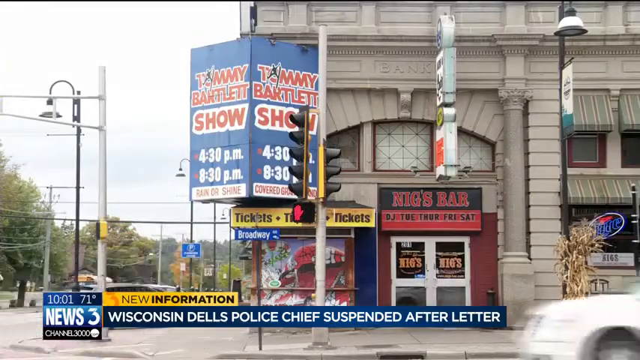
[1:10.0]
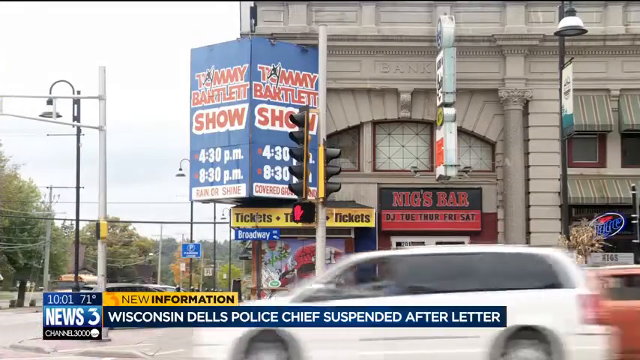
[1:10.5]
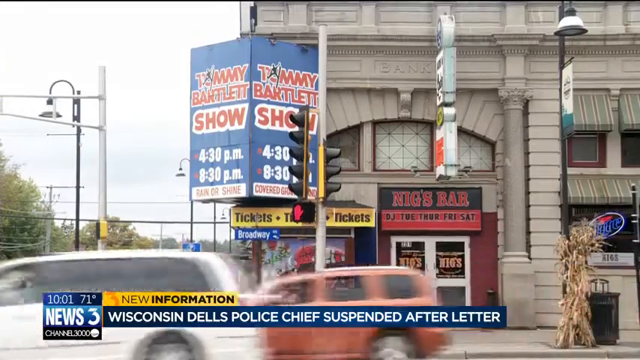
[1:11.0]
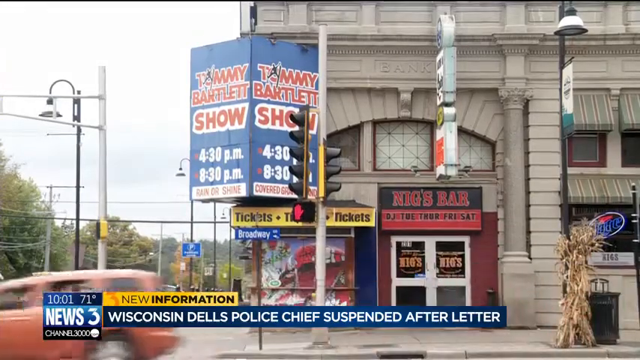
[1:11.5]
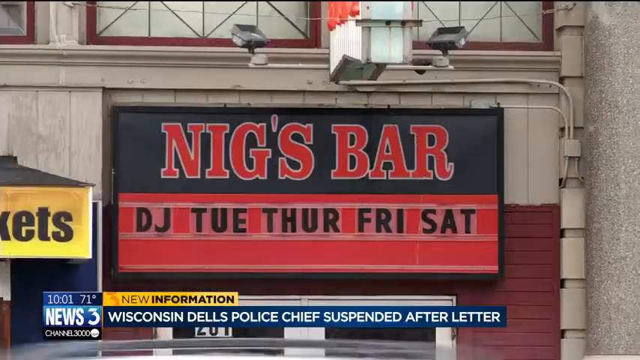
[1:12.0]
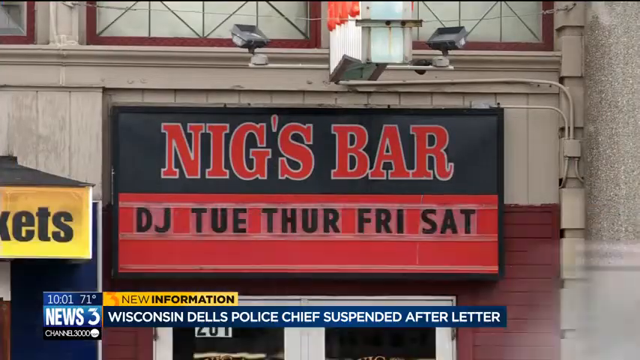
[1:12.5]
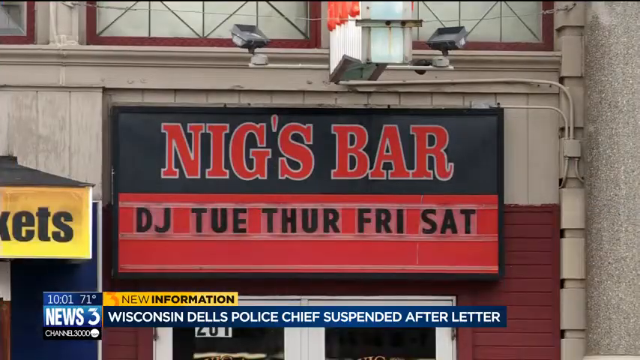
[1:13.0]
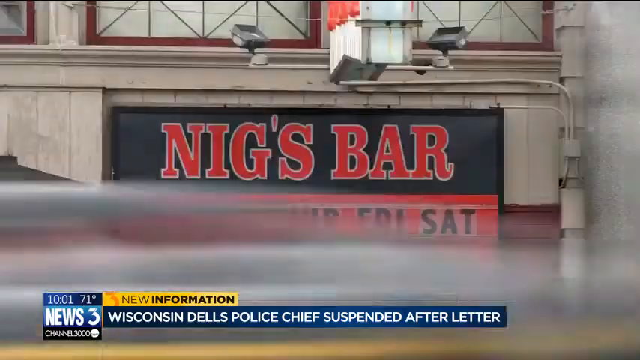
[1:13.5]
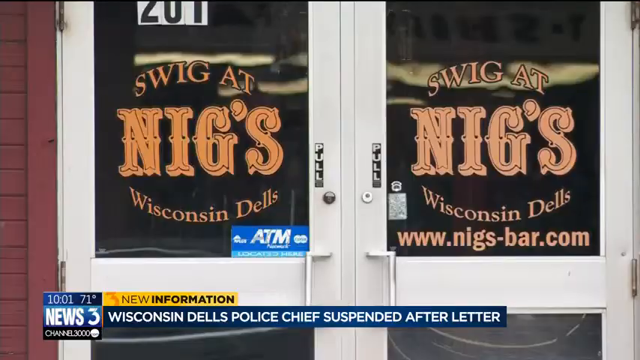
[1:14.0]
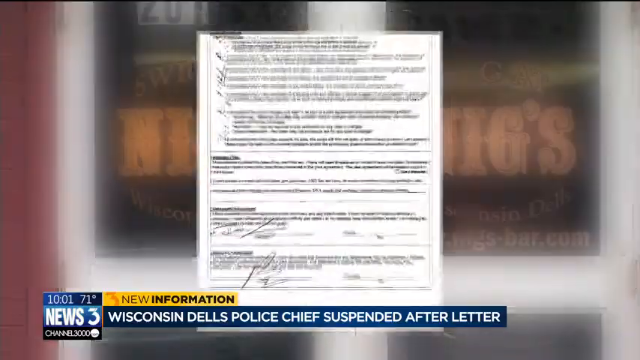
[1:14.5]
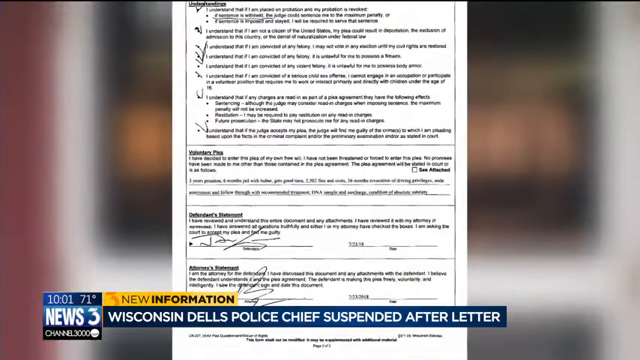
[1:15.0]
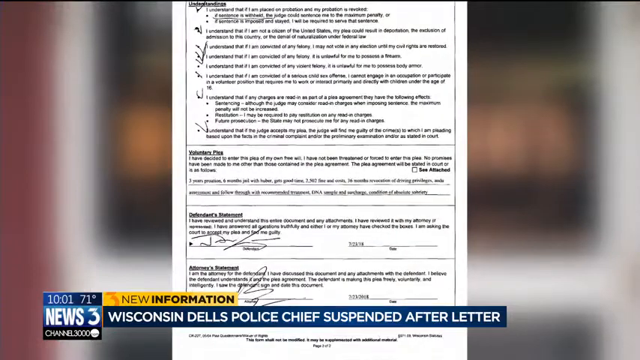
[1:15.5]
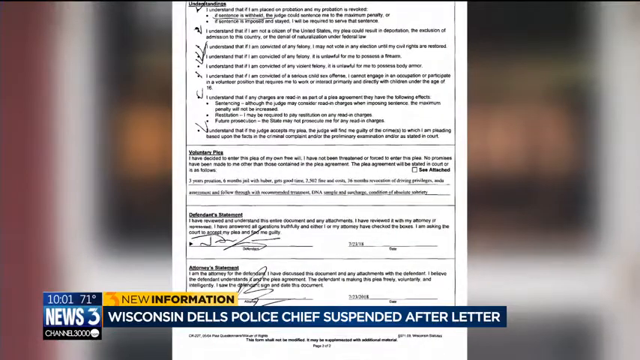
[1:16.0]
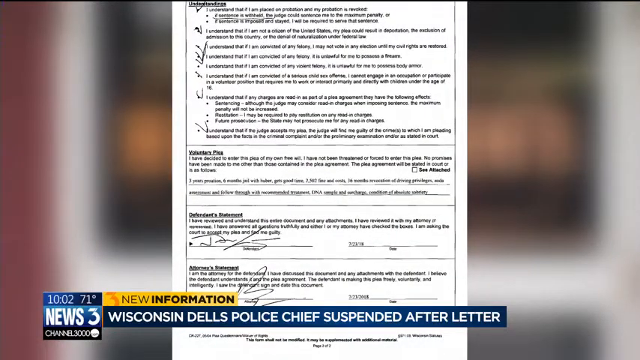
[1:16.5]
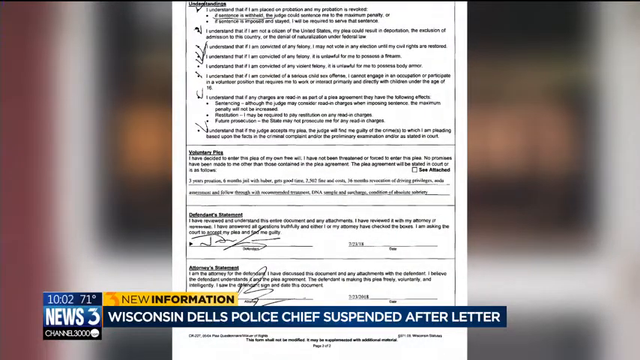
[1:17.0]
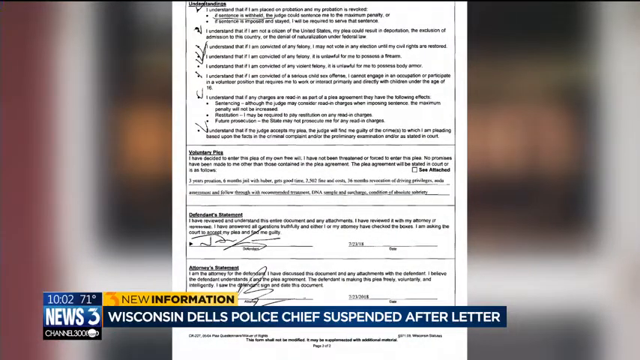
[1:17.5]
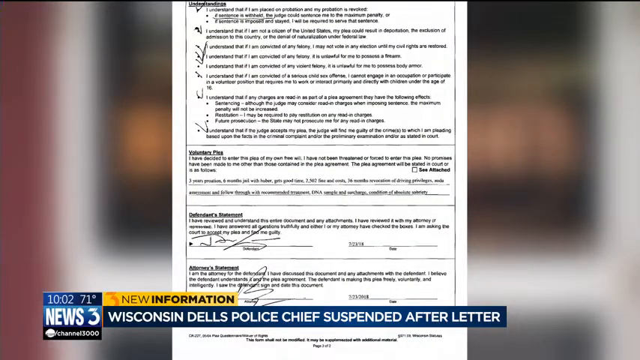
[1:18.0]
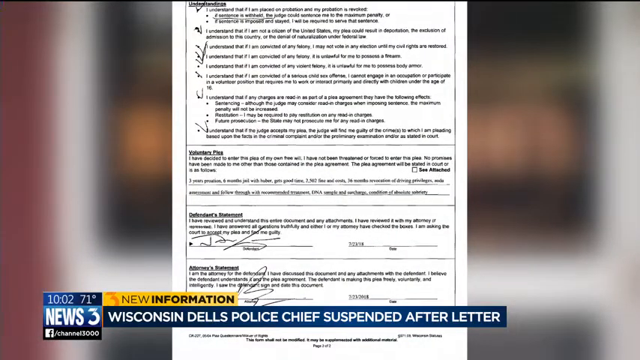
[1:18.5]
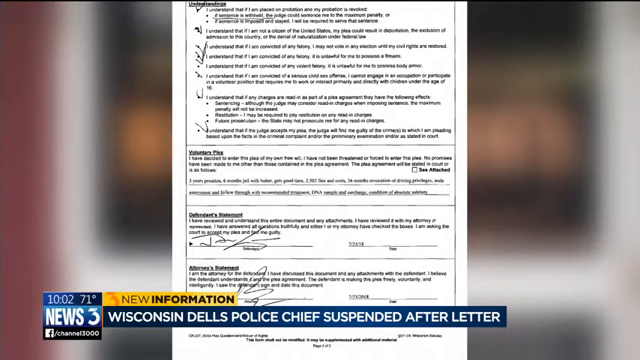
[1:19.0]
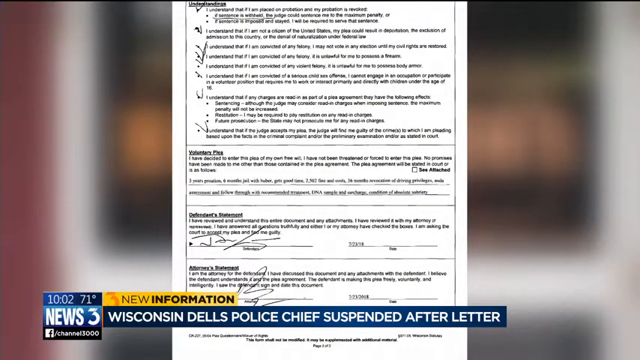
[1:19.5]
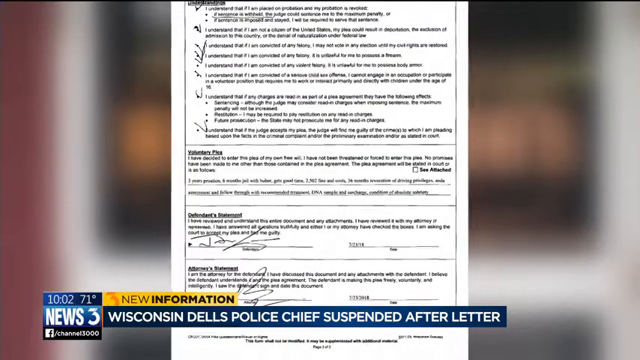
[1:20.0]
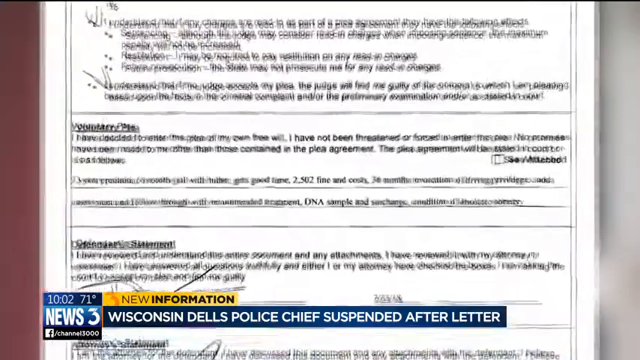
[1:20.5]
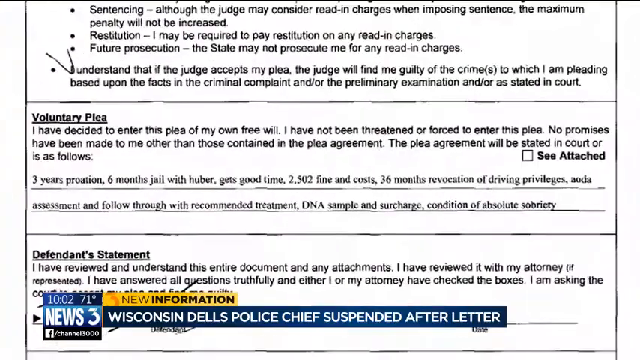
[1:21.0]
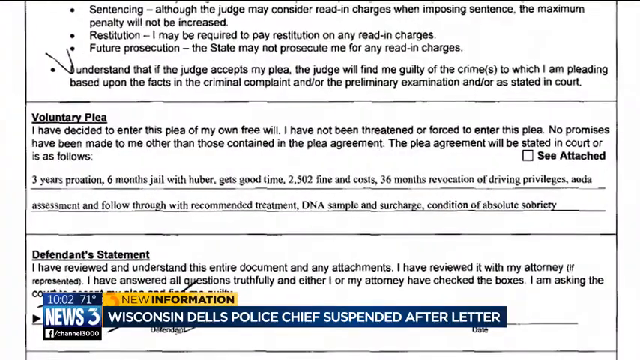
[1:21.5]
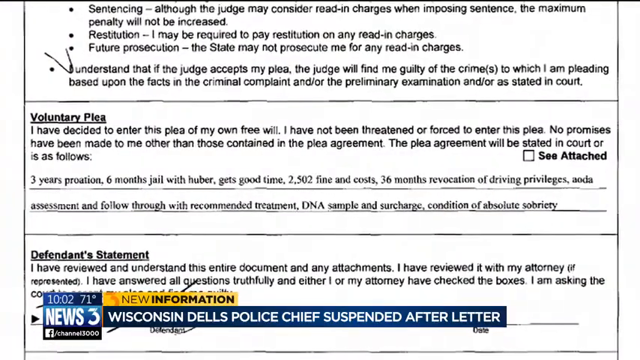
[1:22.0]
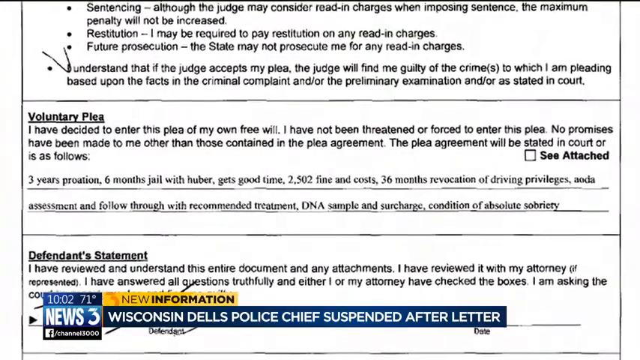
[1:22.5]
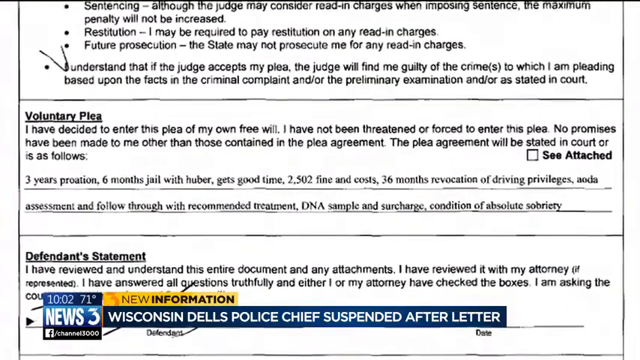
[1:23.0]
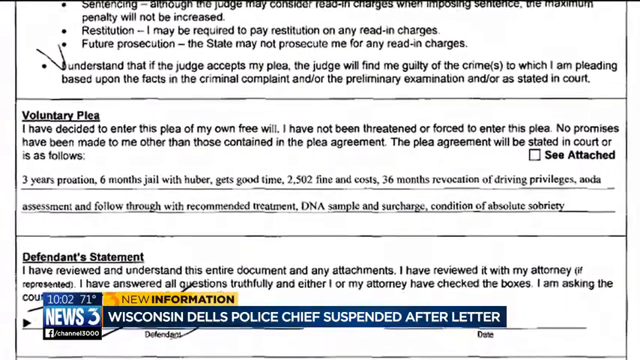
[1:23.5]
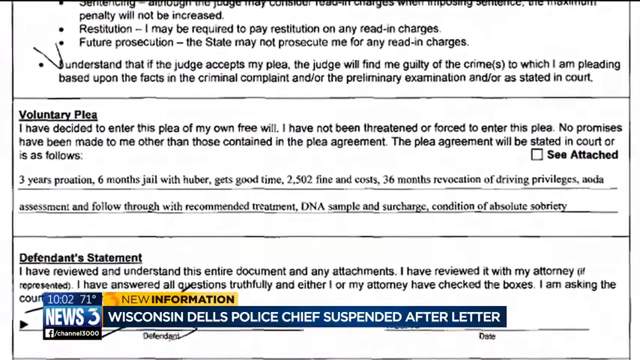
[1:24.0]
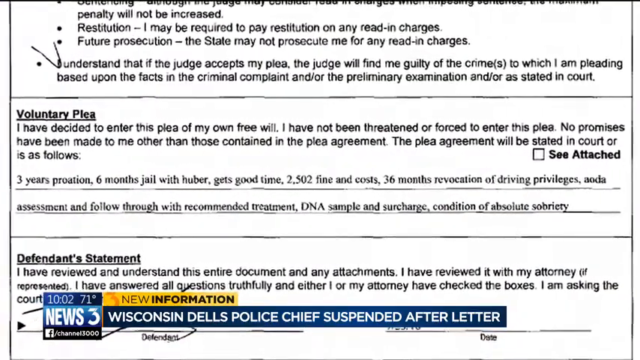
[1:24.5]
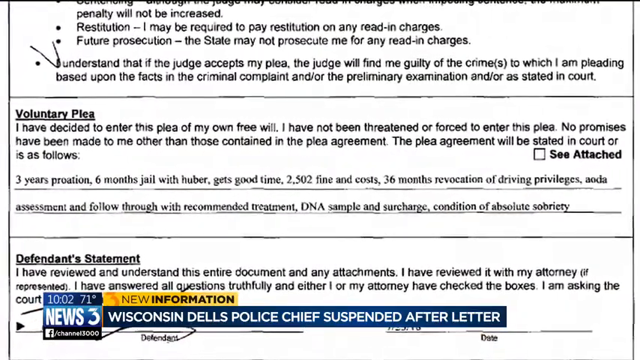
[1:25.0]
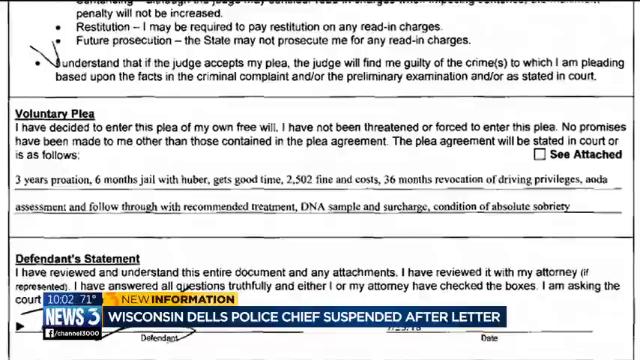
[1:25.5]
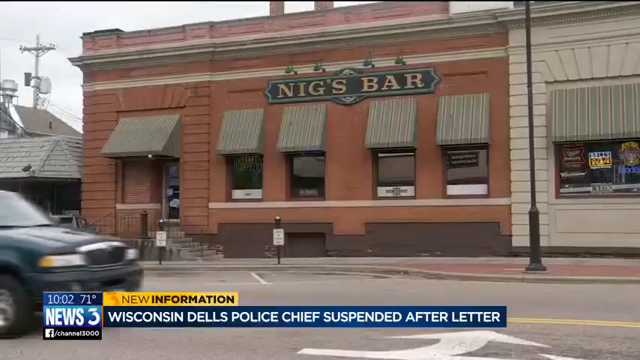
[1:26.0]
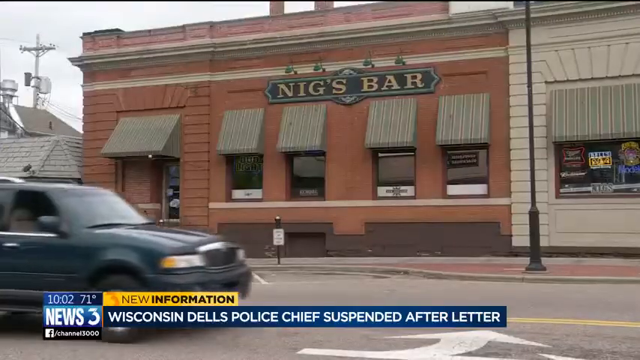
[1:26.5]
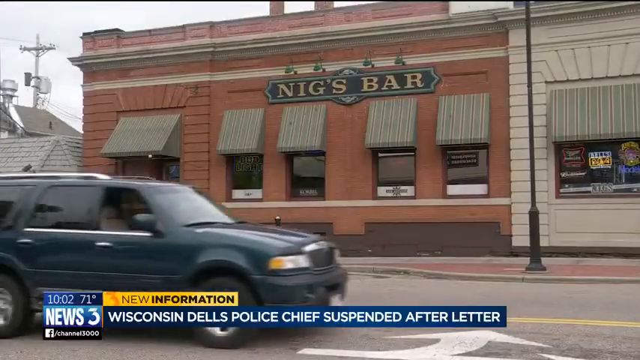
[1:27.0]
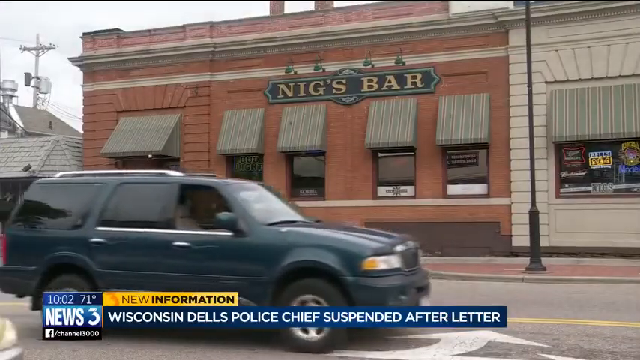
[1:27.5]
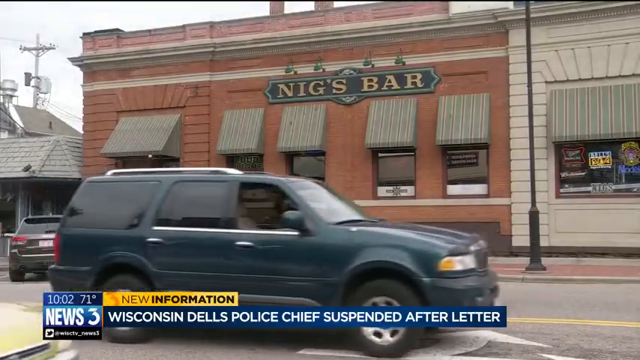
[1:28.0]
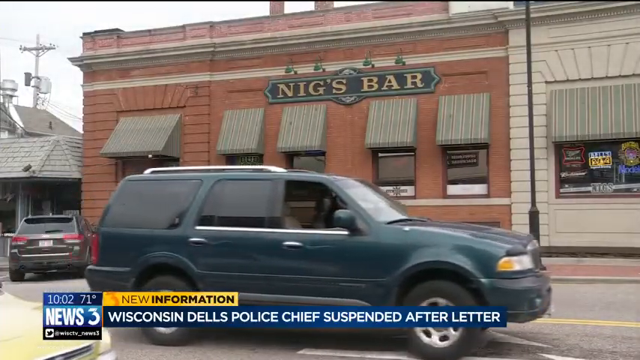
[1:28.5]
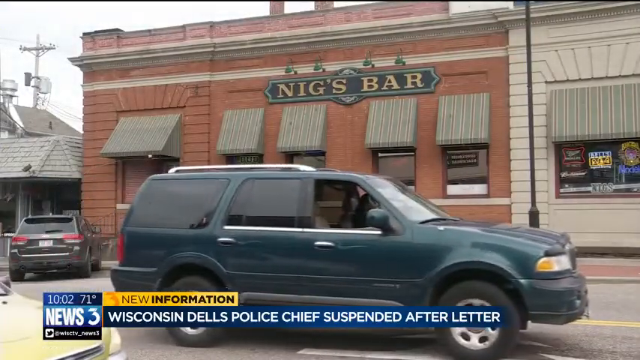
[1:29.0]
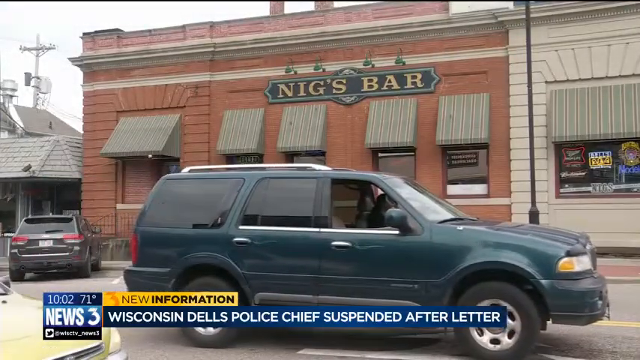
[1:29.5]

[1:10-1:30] The Channel 3 News report shows the headline "Wisconsin Dales police chief suspended after letter." Traffic is visible, and Nigs bar appears with a sign reading "DJ Tuesday, Thursday, Friday, Saturday." A letter is shown but is hard to read. A document then appears with the words "voluntary plea," including the lines "No promises have been made to me other than" and "The agreement will be stated in court as follows," followed by a "Defendant's statement" section containing "I've answered all questions." Part of the document is blocked off. More cars drive along the street next to the bar.